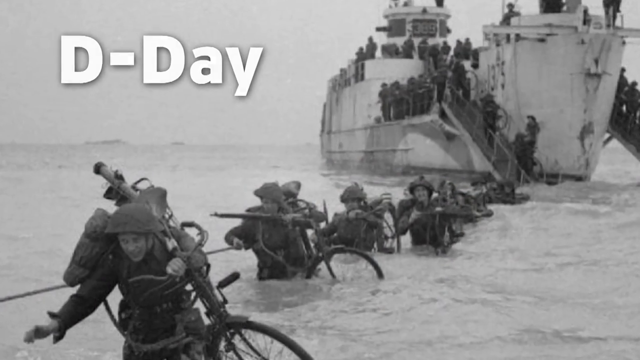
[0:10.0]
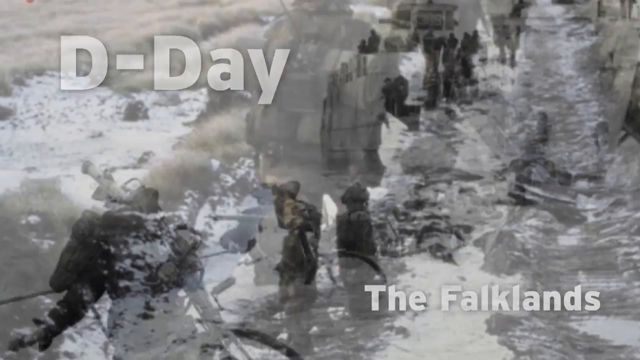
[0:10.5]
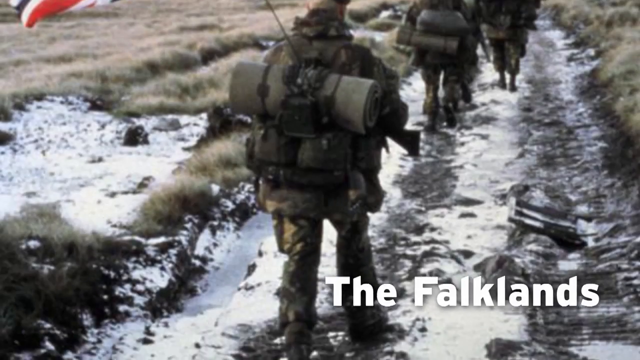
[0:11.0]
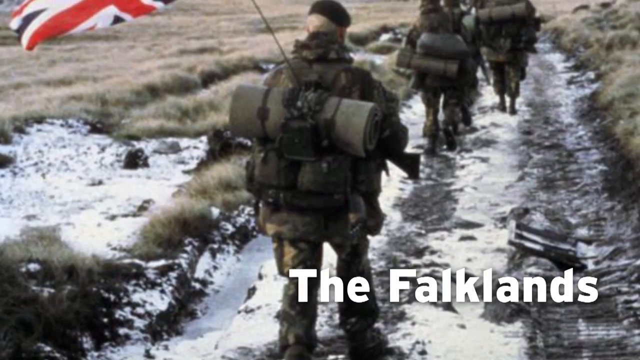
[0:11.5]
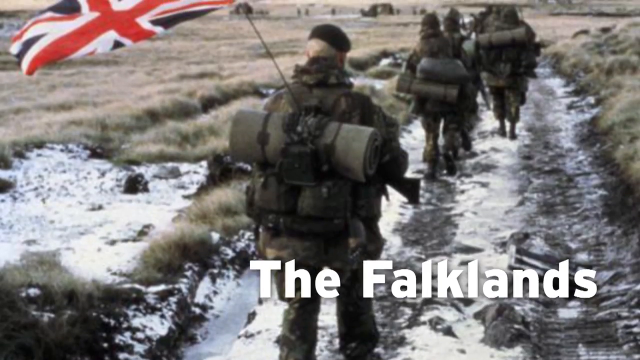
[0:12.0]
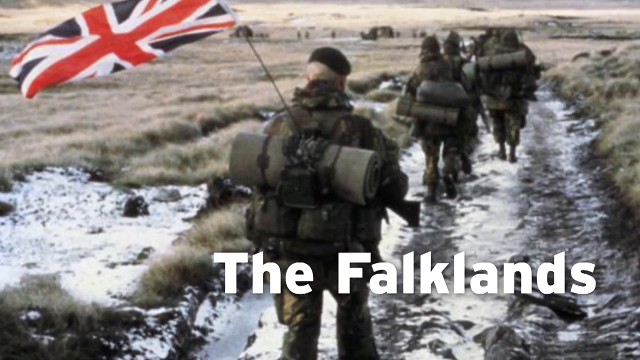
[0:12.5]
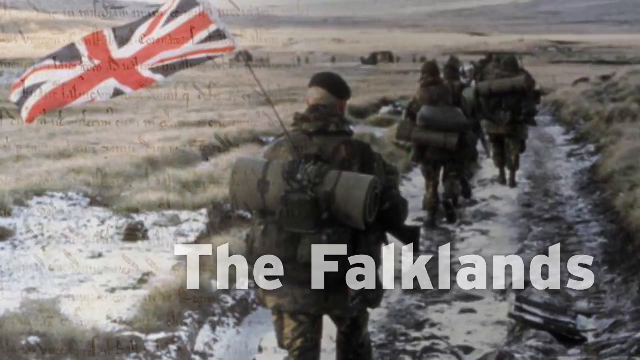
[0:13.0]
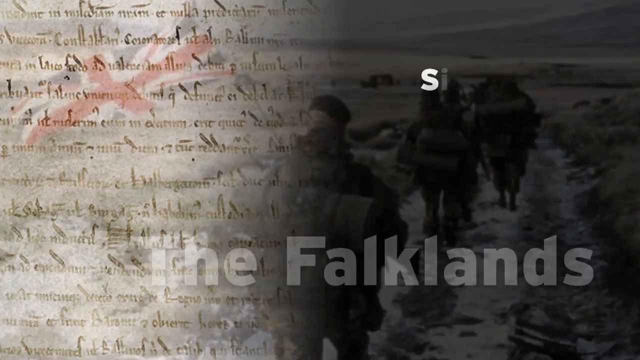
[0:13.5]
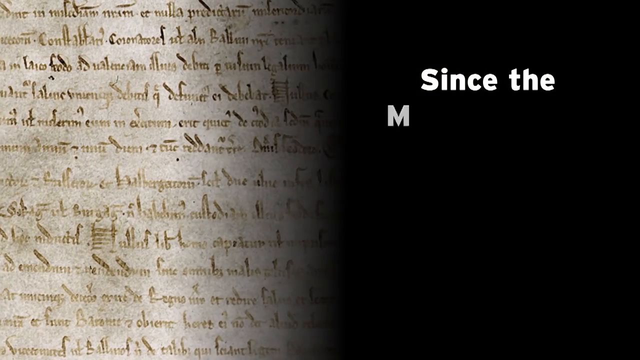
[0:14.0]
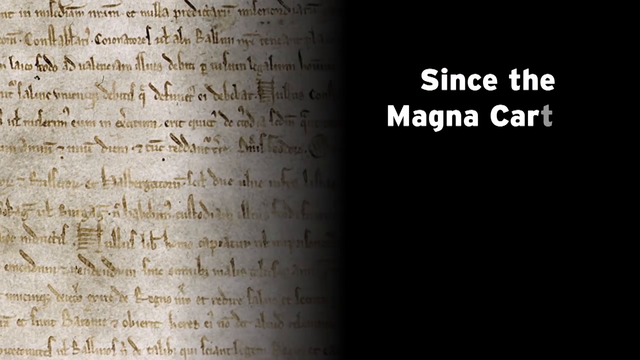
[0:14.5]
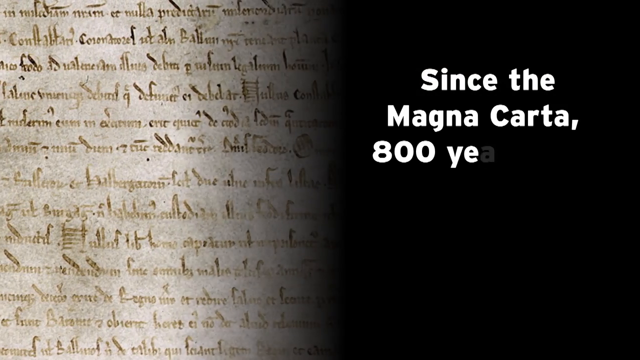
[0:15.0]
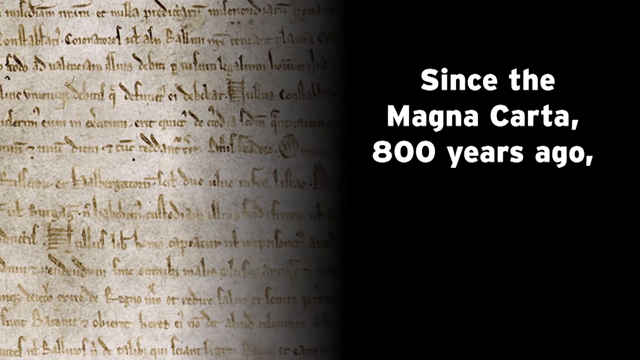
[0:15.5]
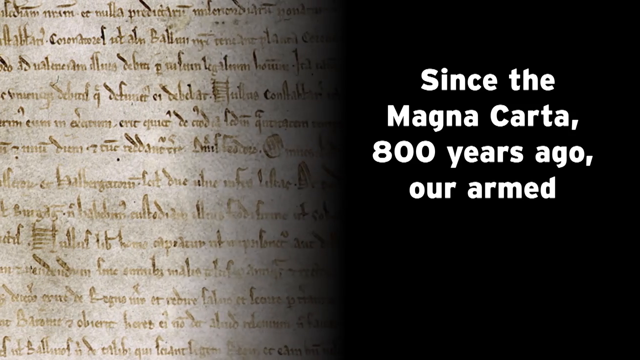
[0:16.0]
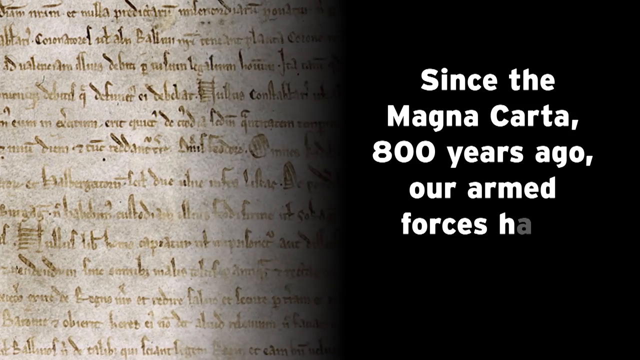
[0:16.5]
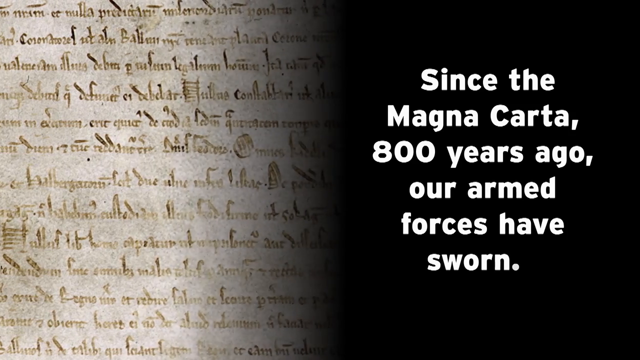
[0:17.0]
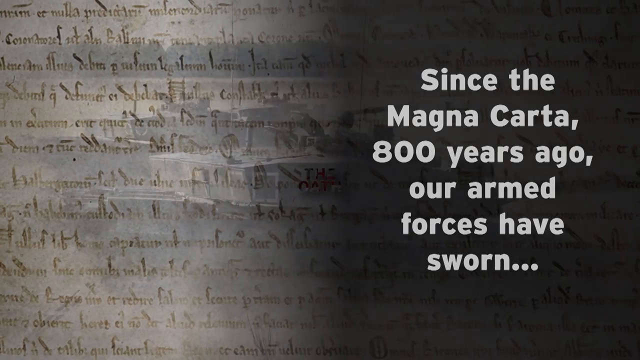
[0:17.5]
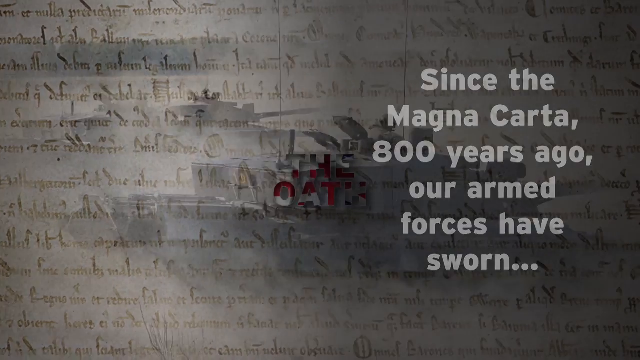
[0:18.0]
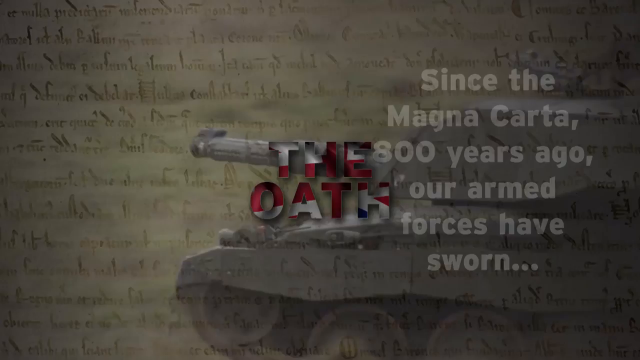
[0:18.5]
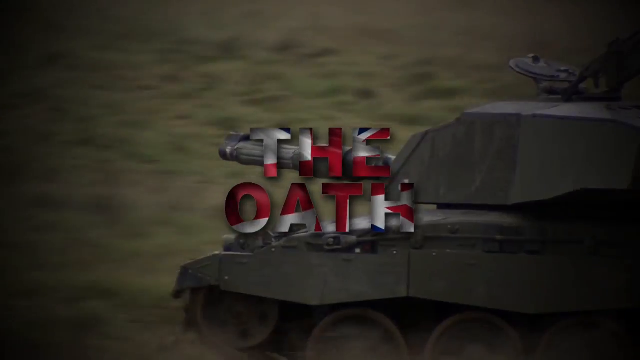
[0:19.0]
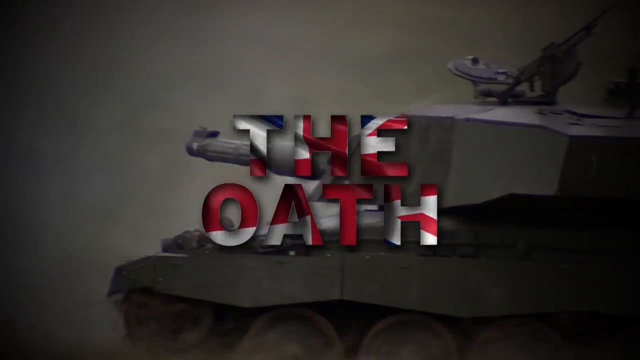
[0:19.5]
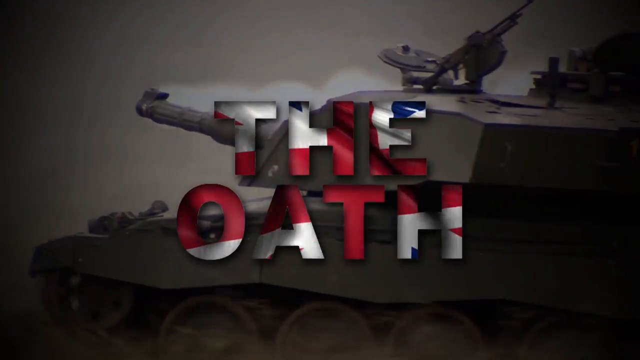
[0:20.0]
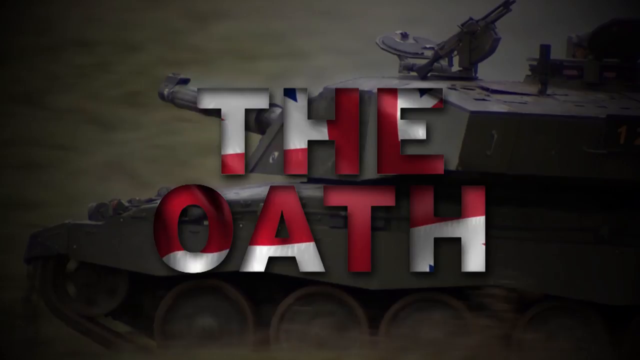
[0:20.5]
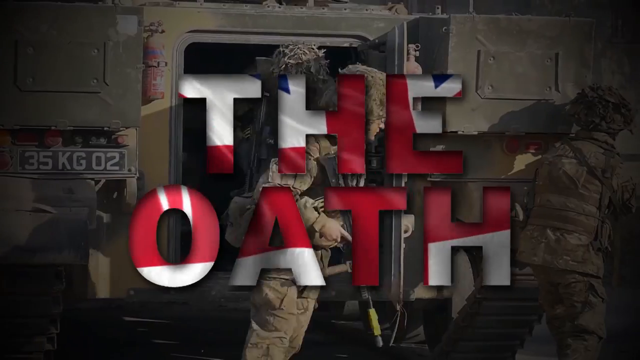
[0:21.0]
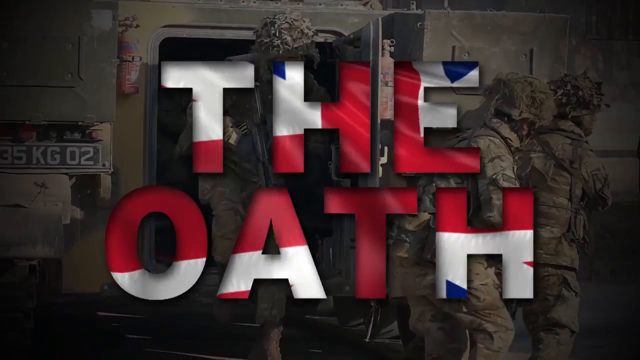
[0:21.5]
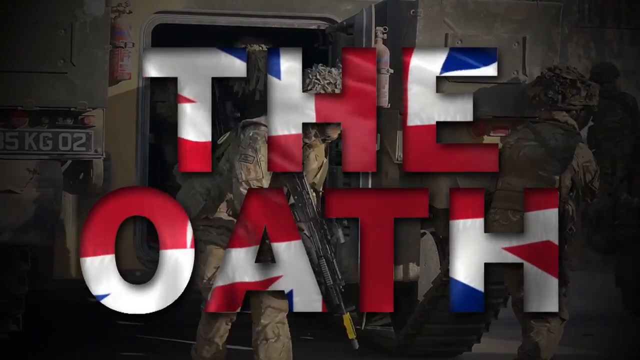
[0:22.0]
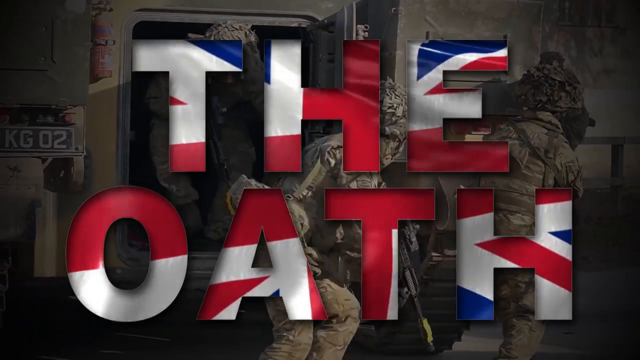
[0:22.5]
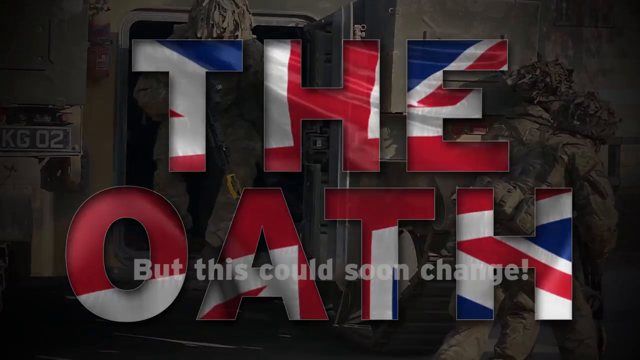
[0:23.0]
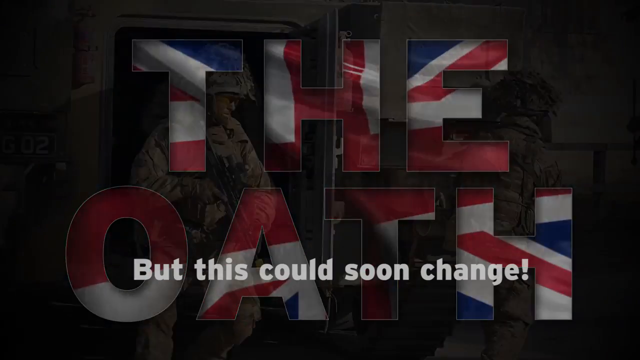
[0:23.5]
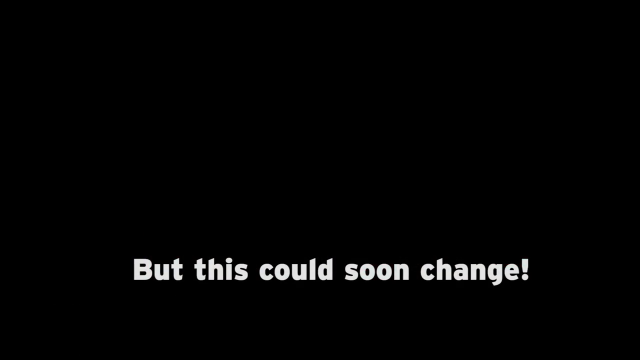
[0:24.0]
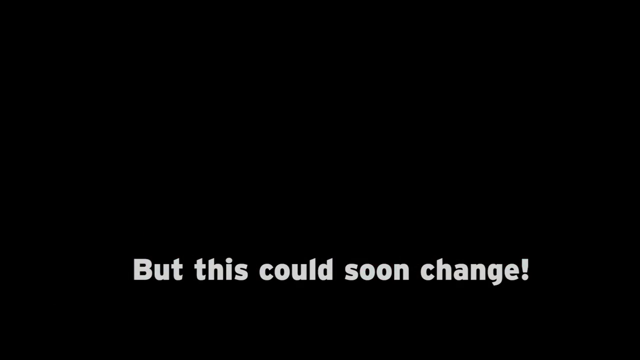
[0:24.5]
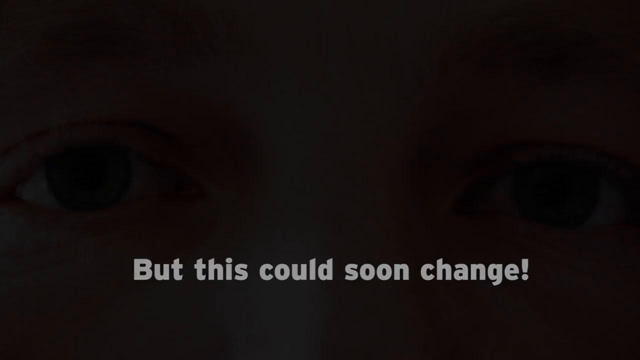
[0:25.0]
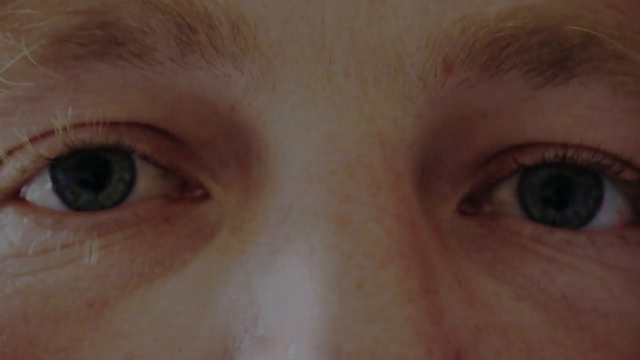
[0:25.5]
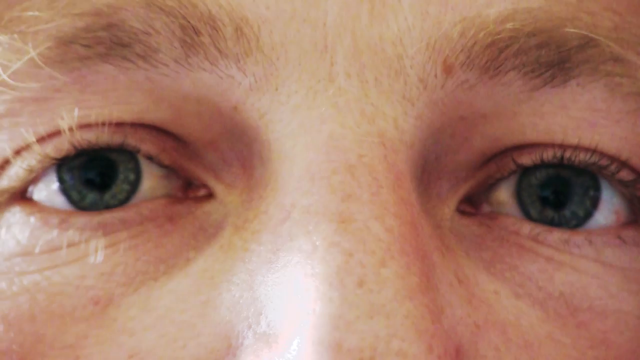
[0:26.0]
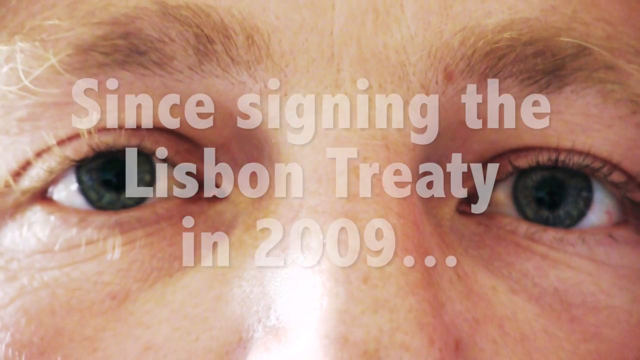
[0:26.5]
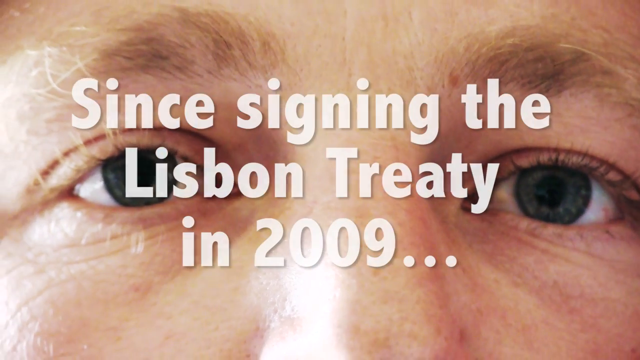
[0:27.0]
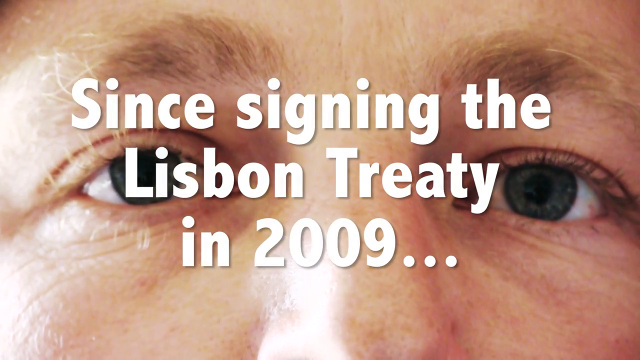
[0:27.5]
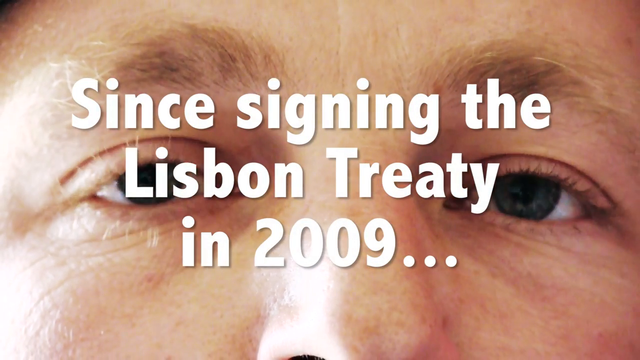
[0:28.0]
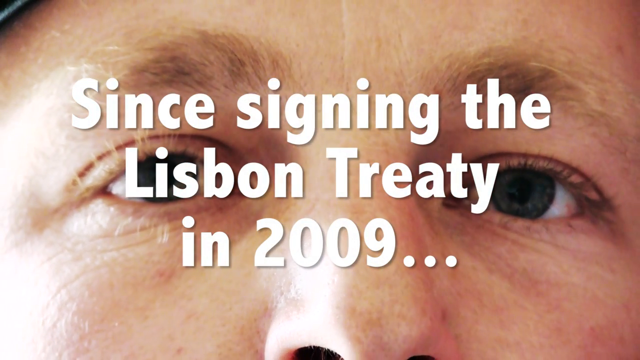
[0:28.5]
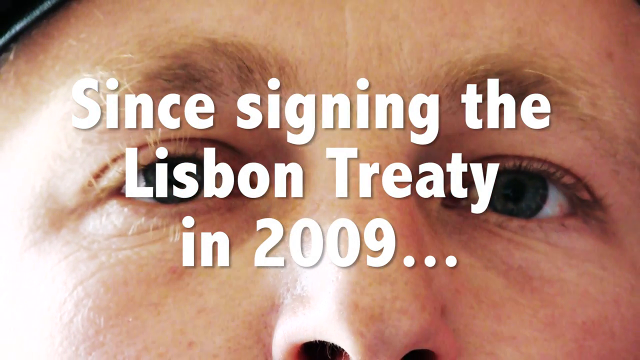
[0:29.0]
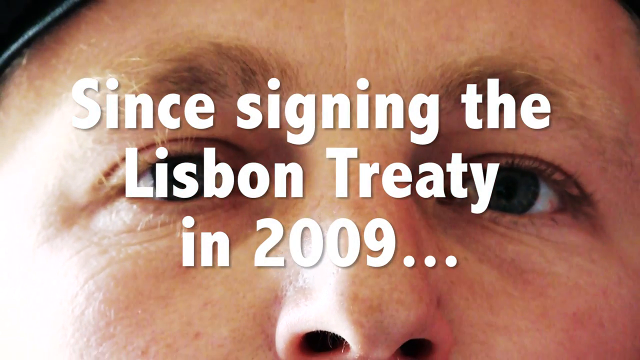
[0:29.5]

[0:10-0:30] A black and white photo appears with the words "D-Day" on the screen. In this photo a line of men walks through the water from a boat; the boat has a bit of a weird shape, and several more men are on top of it. The words "The Falcons" appear over a line of men walking down a road with snow on it, with the British flag flowing in the breeze. A very ancient-looking text is visible, and the words "since the Magna Carta 800 years ago, our armed forces have sworn the oath. but this could soon change since signing the Lisbon Treaty in 2009" appear in bright, bold white lettering. Behind the words "since the Magna Carta 800 years ago our armed forces have sworn" is a black background, and within the words "the oath" is an overlay of the British flag.